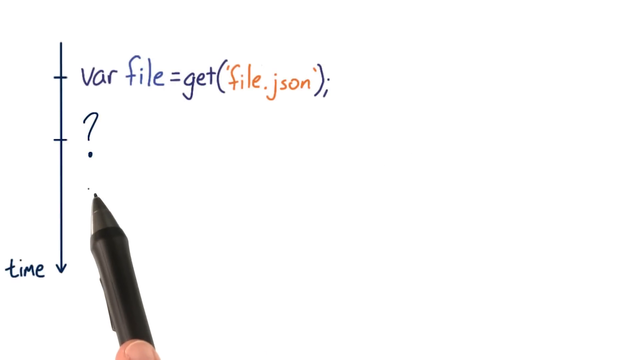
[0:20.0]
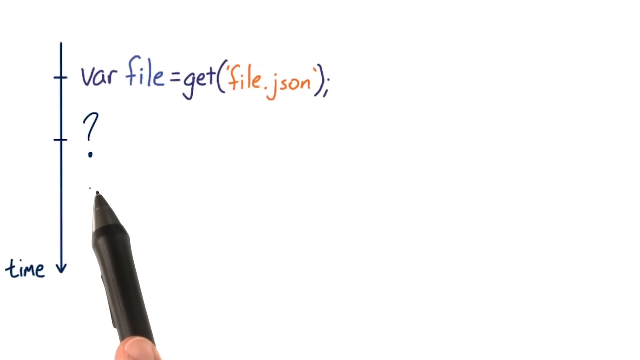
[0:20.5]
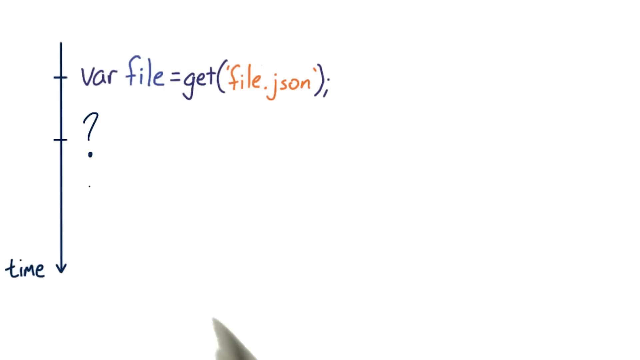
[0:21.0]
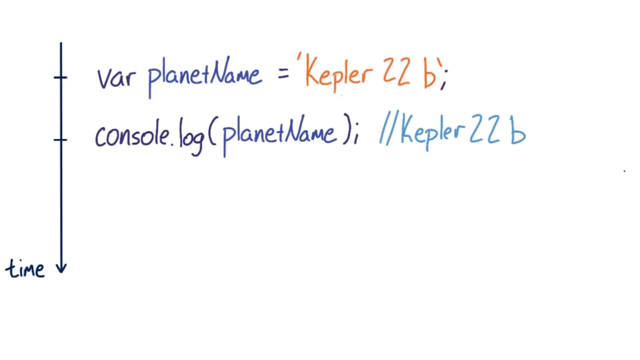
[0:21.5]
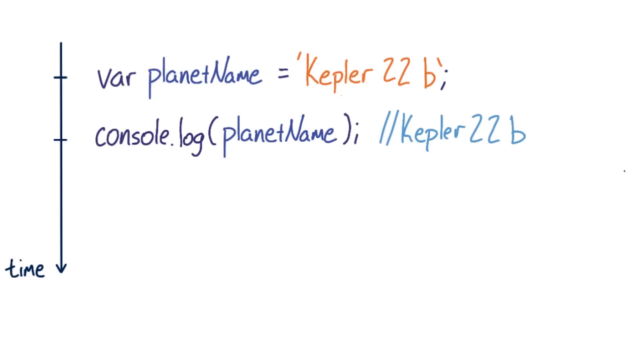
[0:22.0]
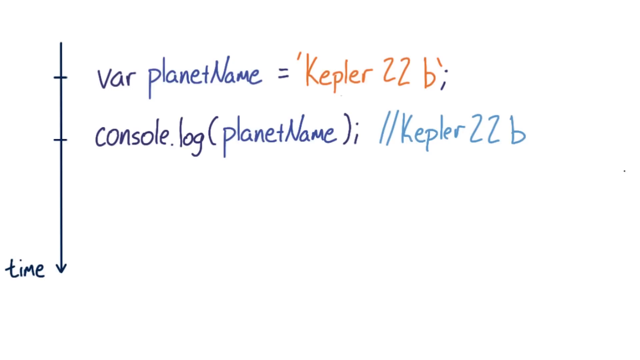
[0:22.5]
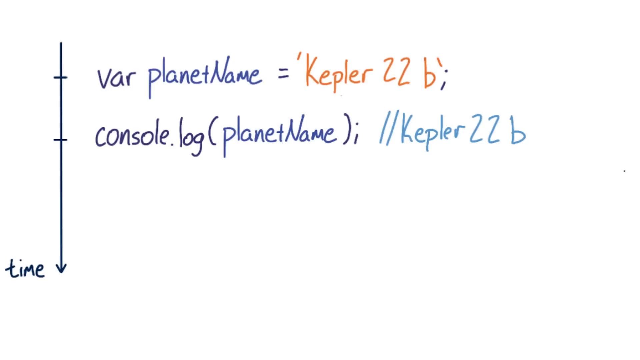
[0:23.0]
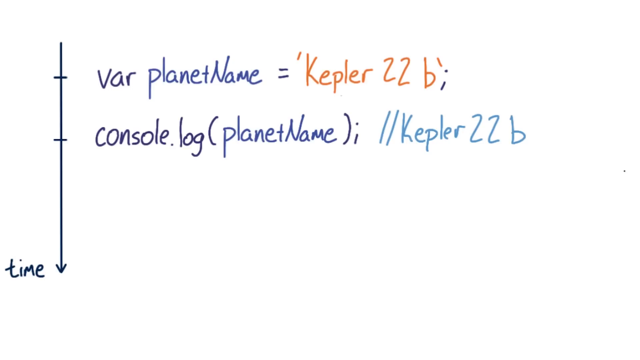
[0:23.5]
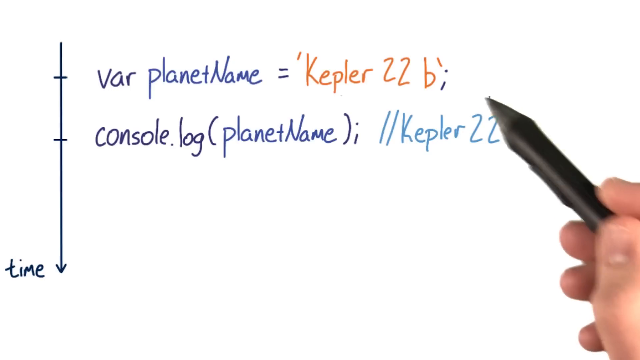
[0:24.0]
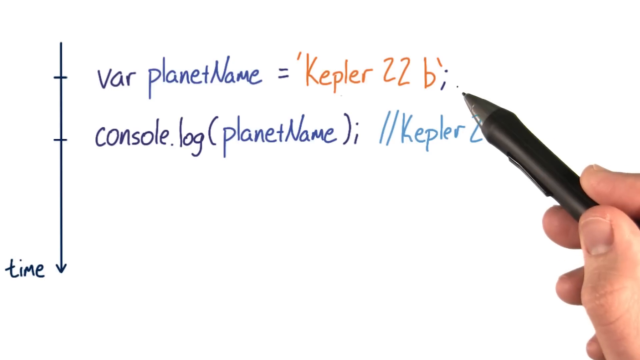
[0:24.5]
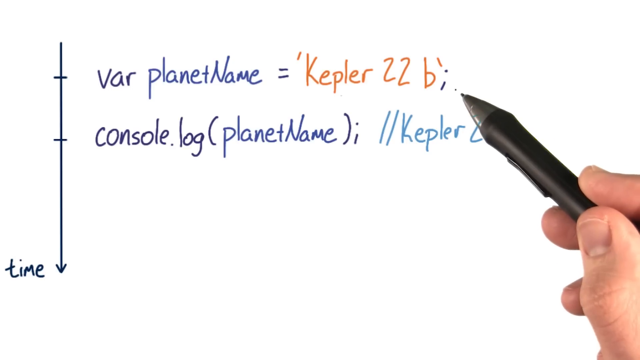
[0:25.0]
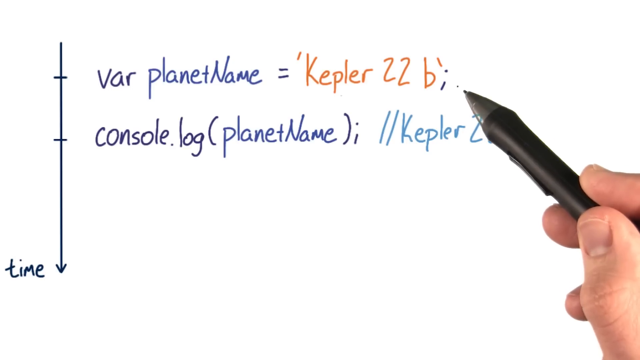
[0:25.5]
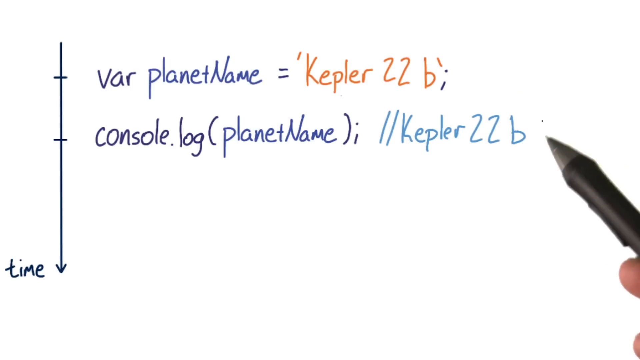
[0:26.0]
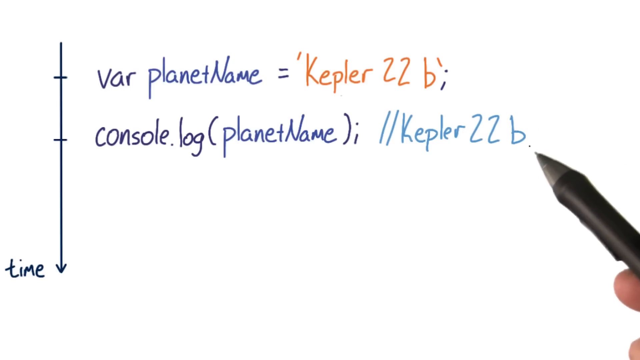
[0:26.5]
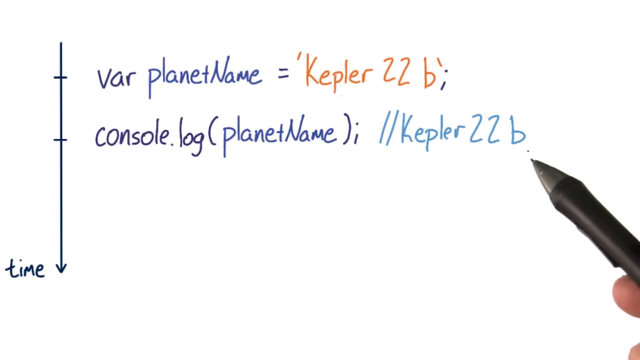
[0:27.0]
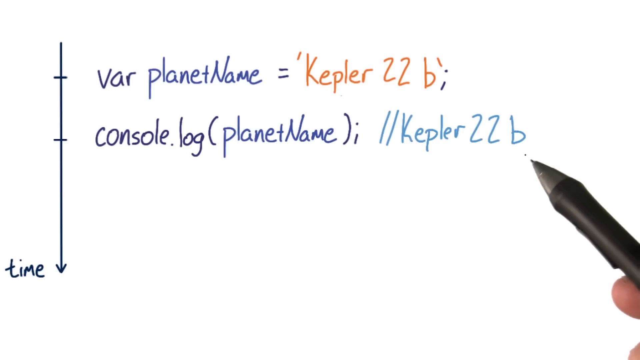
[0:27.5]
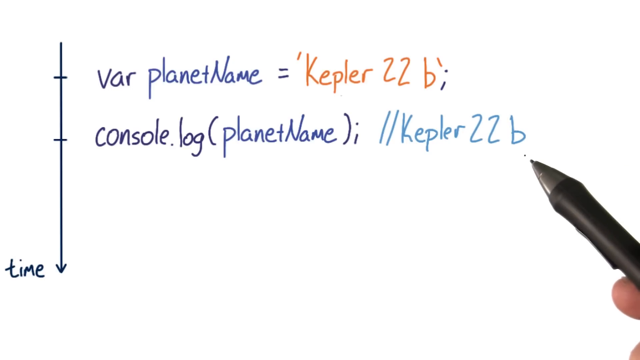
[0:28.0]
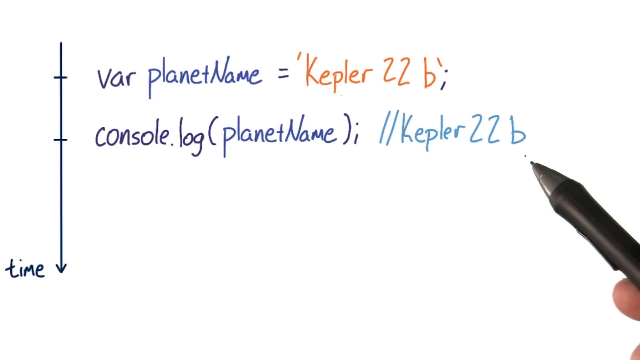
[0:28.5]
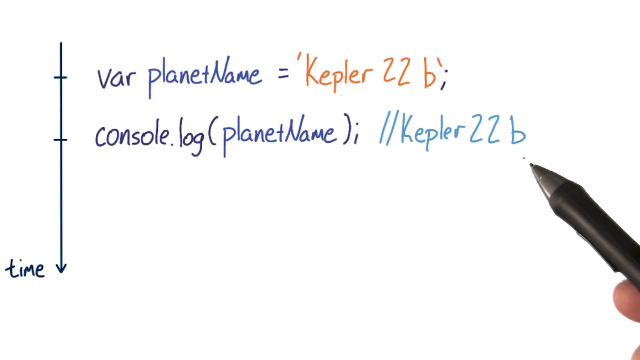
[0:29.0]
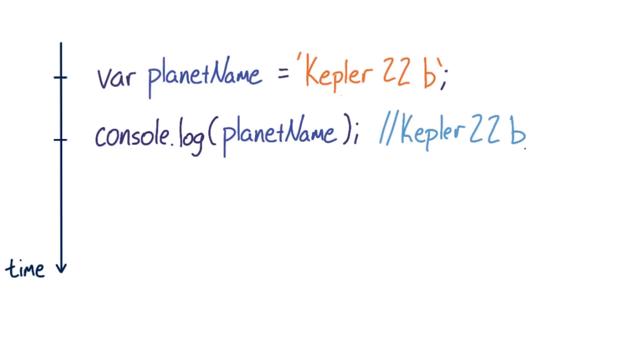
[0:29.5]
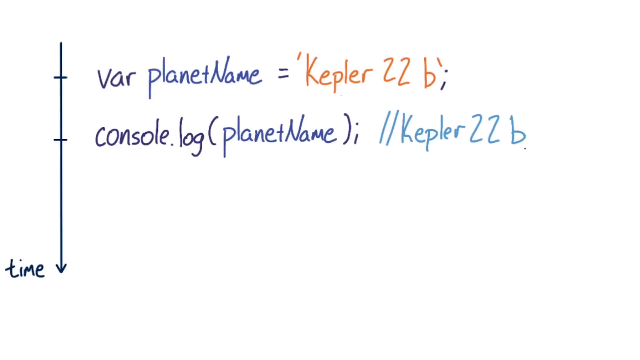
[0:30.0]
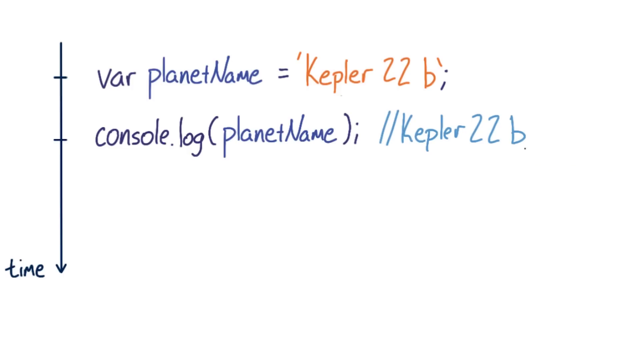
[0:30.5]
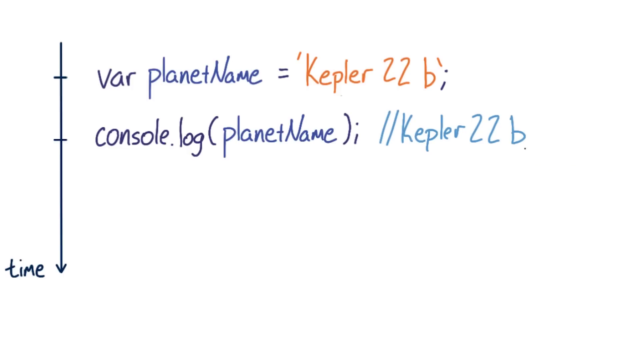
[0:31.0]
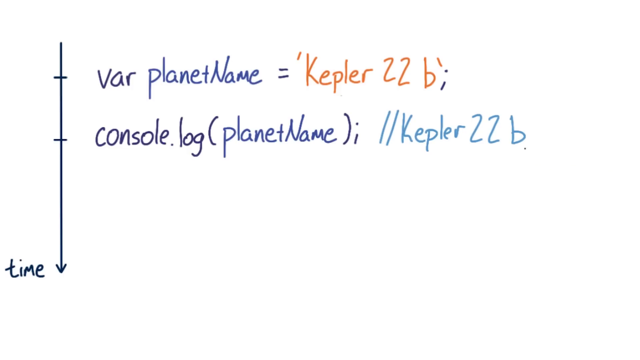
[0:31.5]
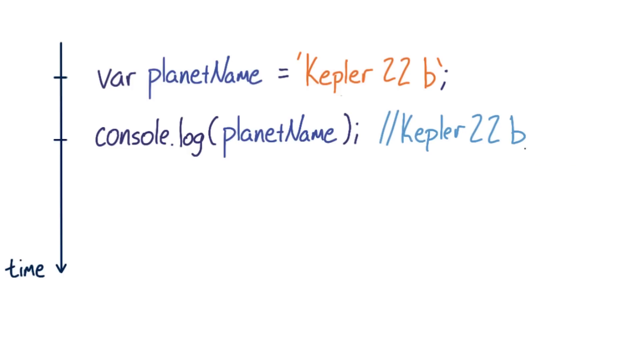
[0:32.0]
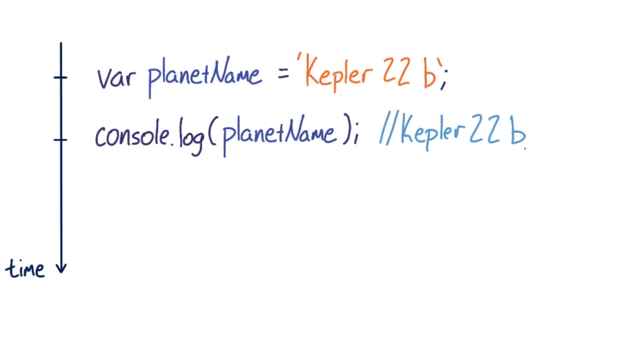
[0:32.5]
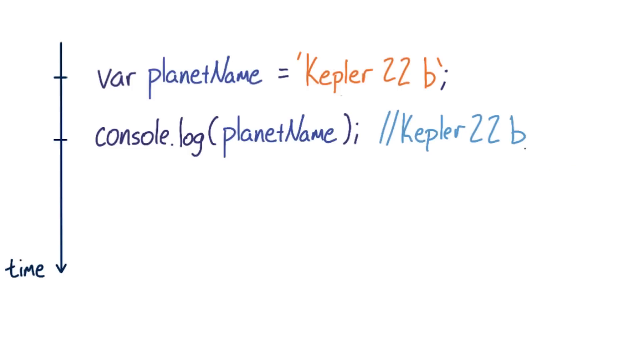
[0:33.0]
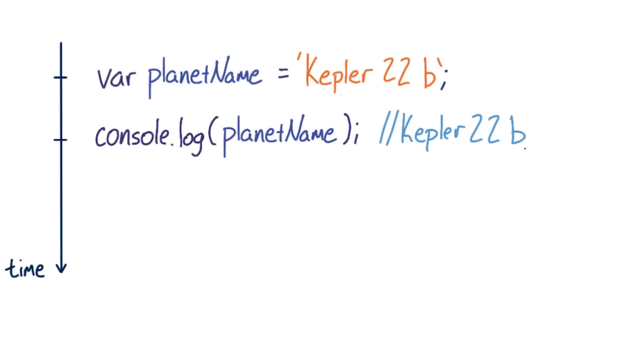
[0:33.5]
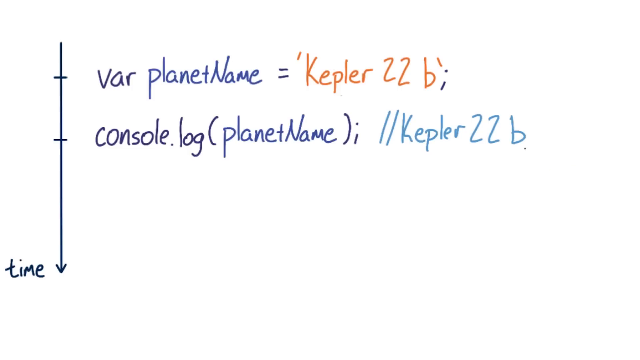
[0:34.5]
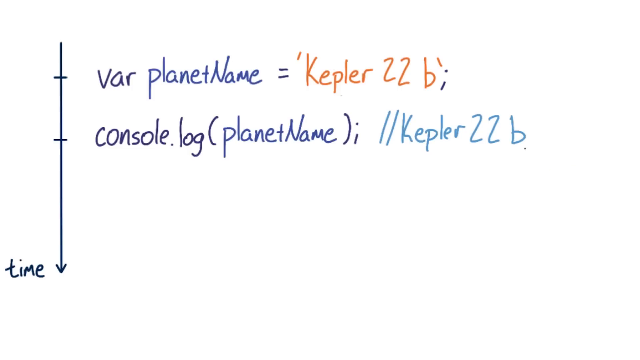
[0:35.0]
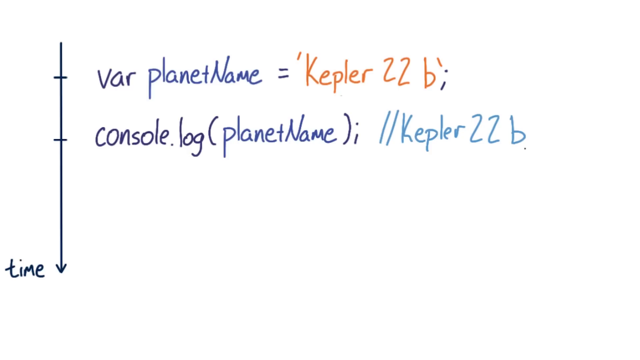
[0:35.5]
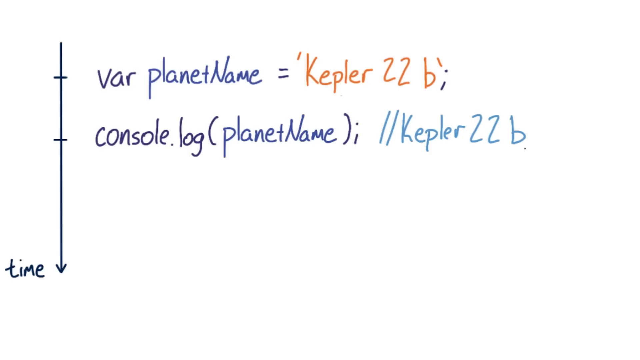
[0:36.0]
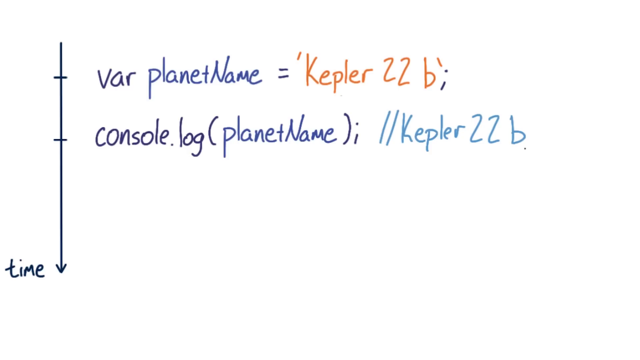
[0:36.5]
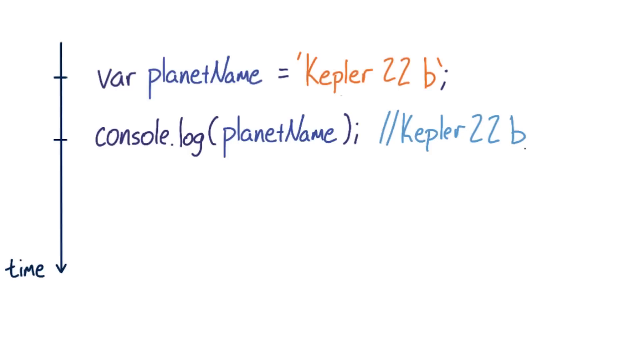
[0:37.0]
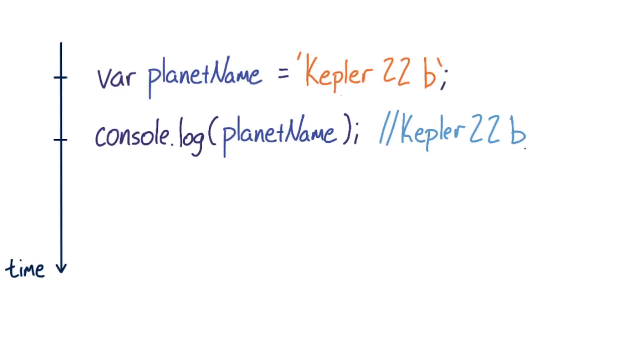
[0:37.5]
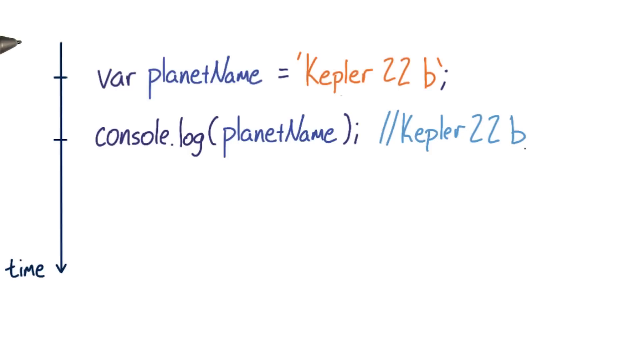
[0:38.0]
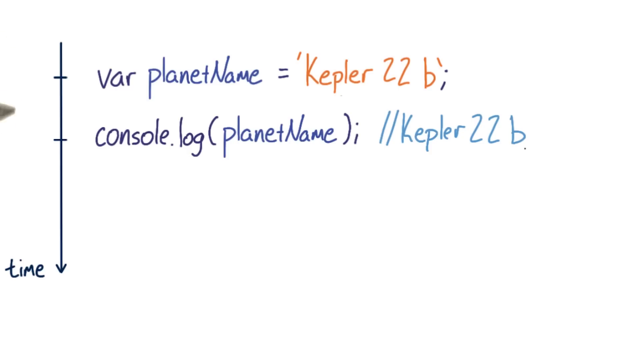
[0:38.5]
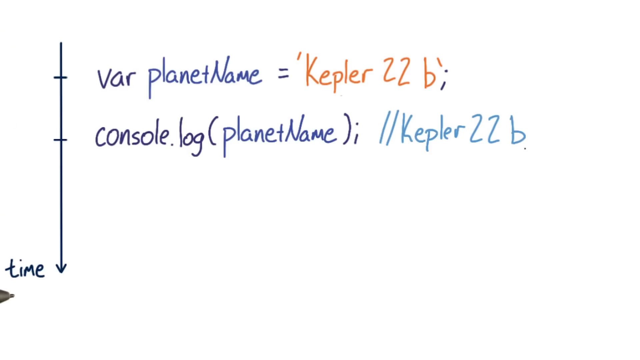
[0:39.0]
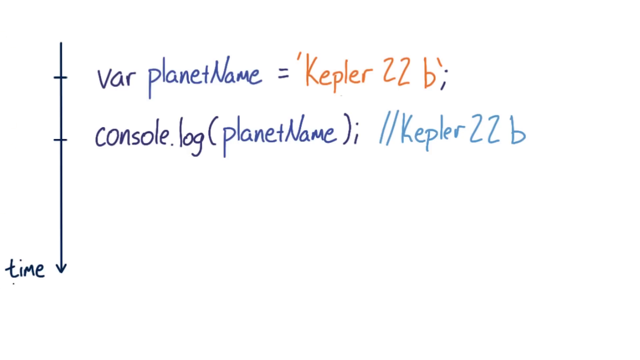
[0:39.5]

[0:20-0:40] What looks like handwritten code is still on screen. Next to a vertical arrow pointing downward with a couple of horizontal marks through it, the top line reads "var file = get(file.json)", and below it, at the next mark, there is a question mark. The code then changes: the top line now reads "var planetName = "Kepler-22b"" and the next line down reads "console.log(planetName); //Kepler-22b". The code is written out rather than entered into a program or onto a computer. A pen comes into frame, points at the lines of code and shakes around as if the person holding it is speaking.